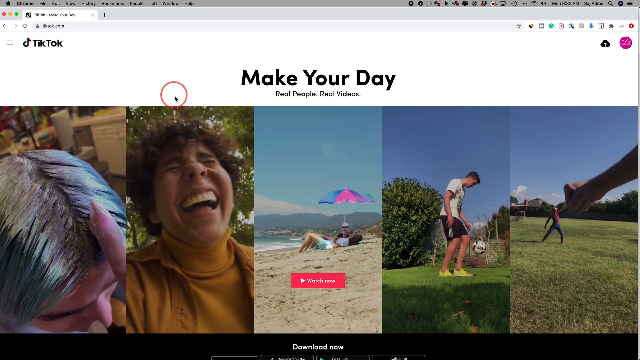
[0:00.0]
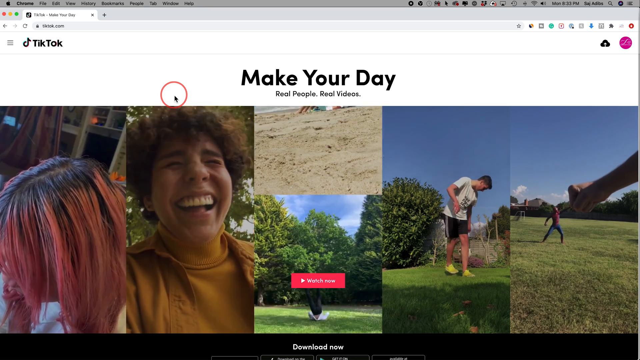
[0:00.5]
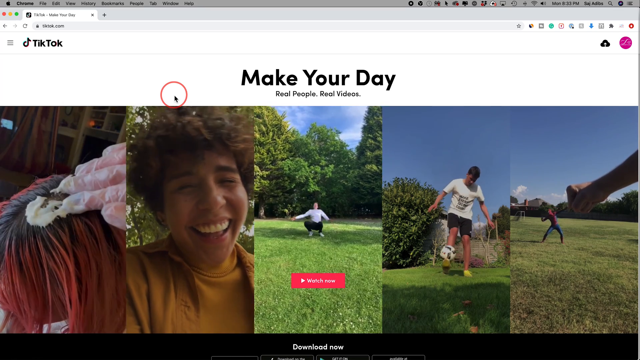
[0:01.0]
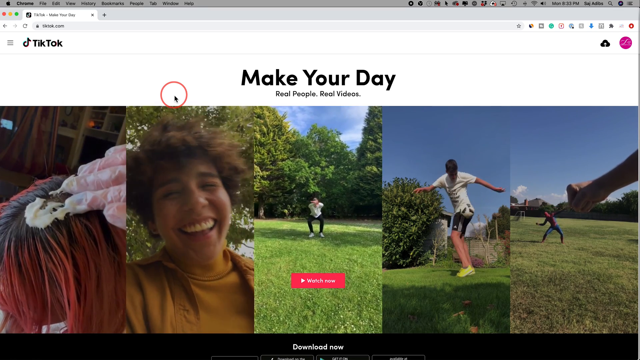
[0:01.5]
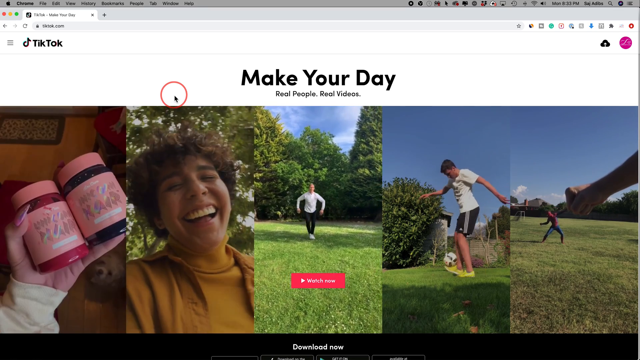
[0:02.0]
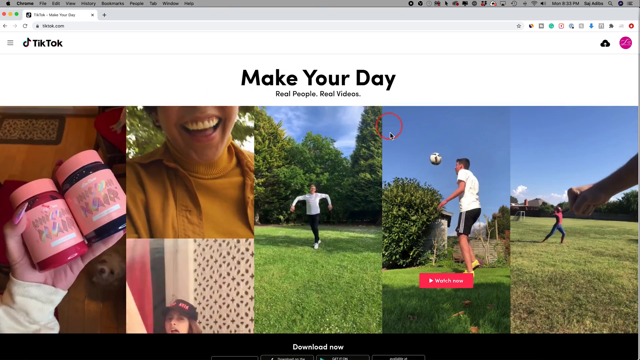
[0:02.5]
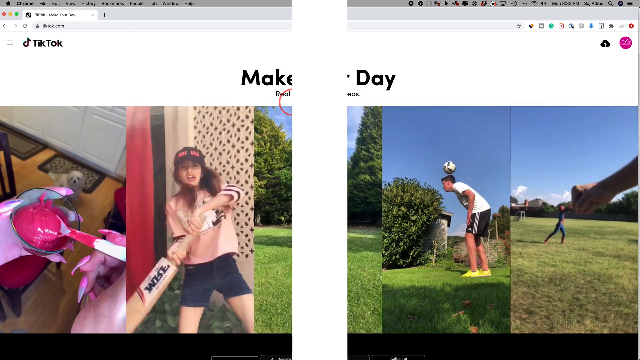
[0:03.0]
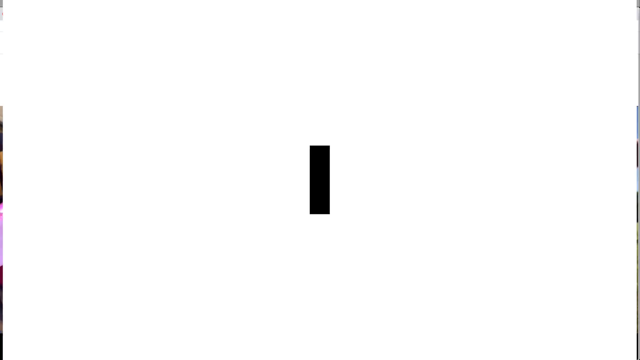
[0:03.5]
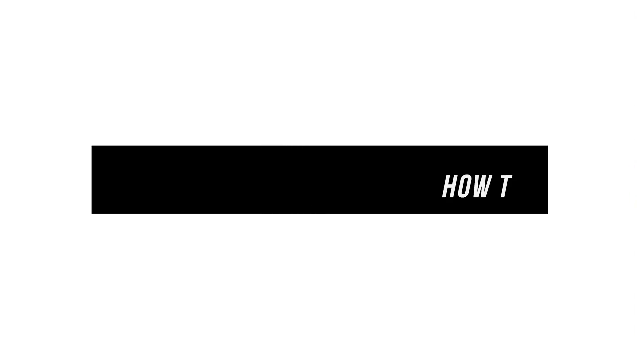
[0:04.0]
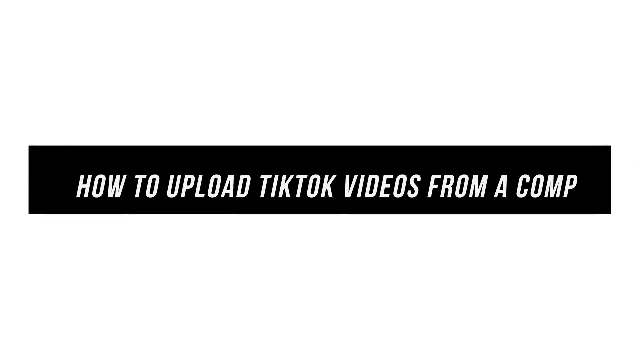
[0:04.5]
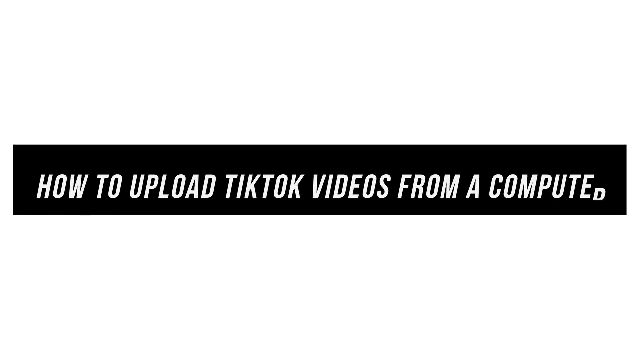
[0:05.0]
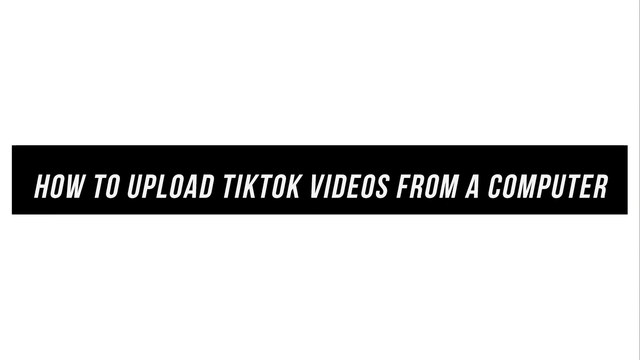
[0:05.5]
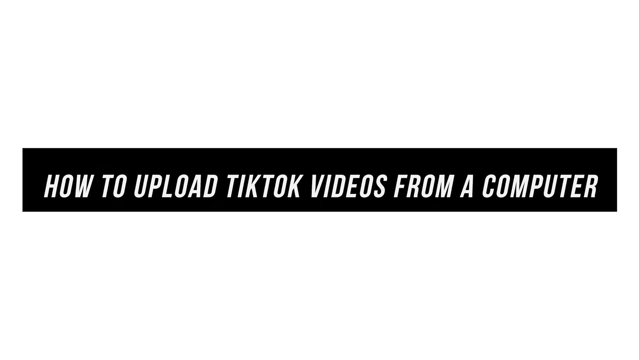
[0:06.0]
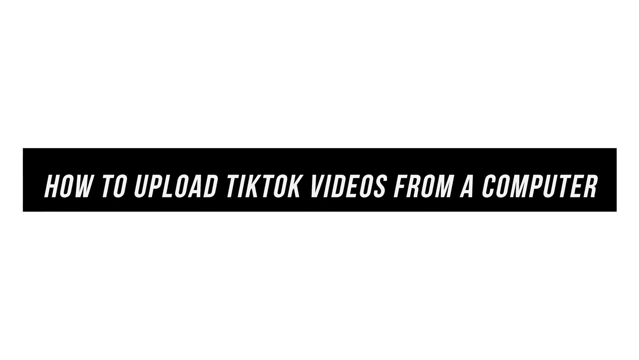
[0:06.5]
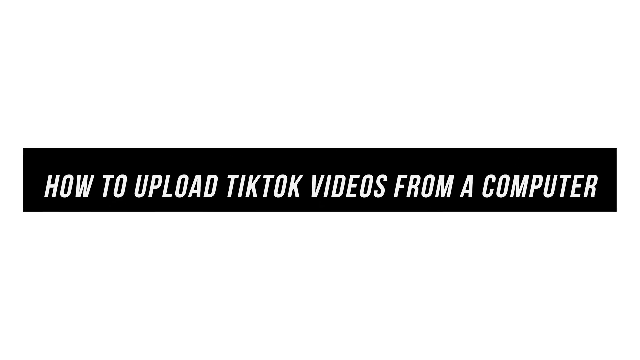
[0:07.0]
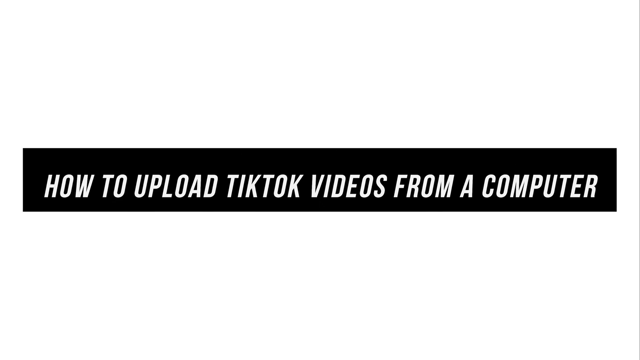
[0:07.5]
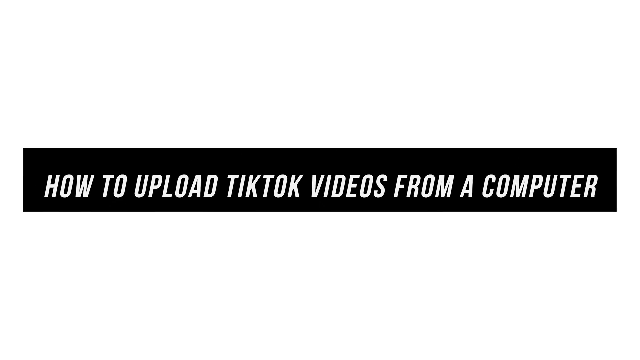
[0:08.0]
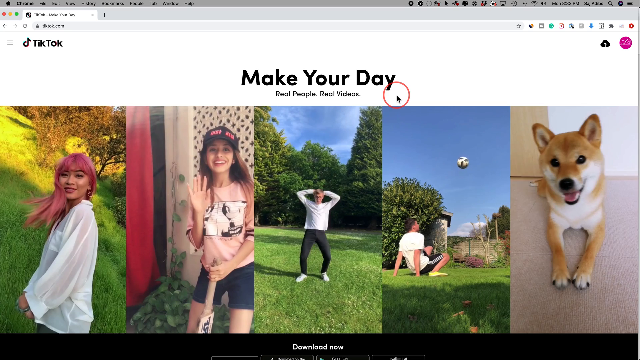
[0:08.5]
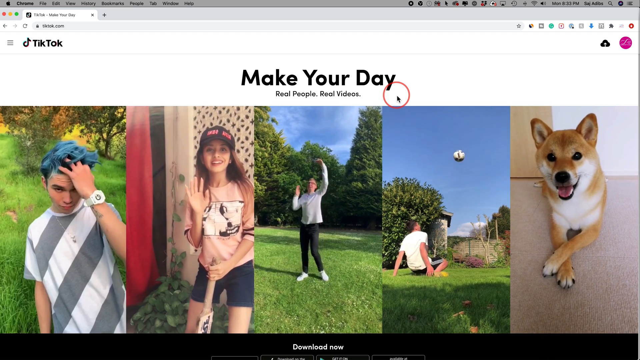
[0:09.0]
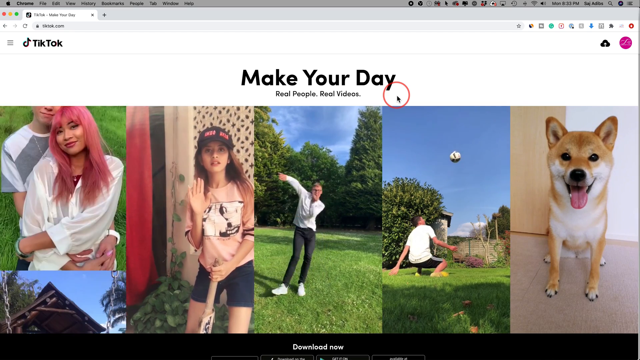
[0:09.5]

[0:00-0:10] A Chrome browser window on an Apple computer shows the front page of TikTok. At the top is the TikTok header, beneath it "make your day" in large text, and under that, in smaller text, "real people real videos." Five vertical videos play side by side. The first shows a woman's head as she spreads some kind of cream into her pink hair. The video to its right shows a boy with curly hair outside underneath a tree, laughing; he wears a brown shirt with a yellow shirt underneath. The next shows a lady squatting in the middle of a park, who stands up and approaches the viewer doing a bizarre dance. The next shows a man in the park doing tricks with a ball involving his head, along with some fancy footwork. The last video on the right is a point-of-view image of someone receiving something thrown to him. After these videos play, the screen whites out and a black rectangle expands in the middle of the screen with the text "how to upload TikTok videos from a computer." It stays for a second, then the page returns to the original layout of five vertical videos. The first shows a man with blue hair running his fingers through his hair, wearing a gray and white striped shirt. Next to it, a woman in a pink shirt with some kind of manga panel on it and a black hat with pink text does some kind of Vulcan salute while wielding a bat of some sort. The next video shows the same dancing person in the same park doing a spin away from the viewer, the next shows the same person doing tricks with the ball, and the last shows a Shiba Inu dog crossing his arms.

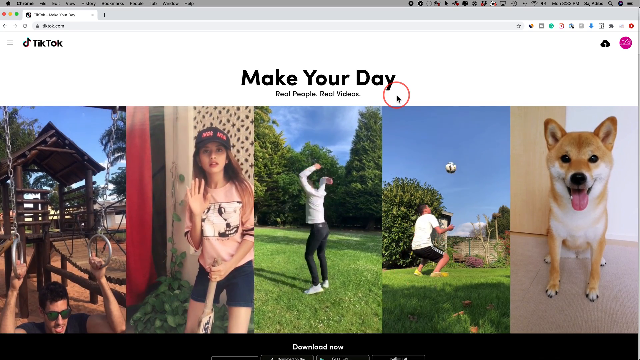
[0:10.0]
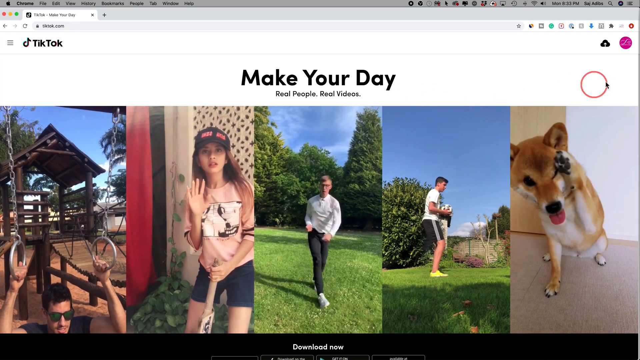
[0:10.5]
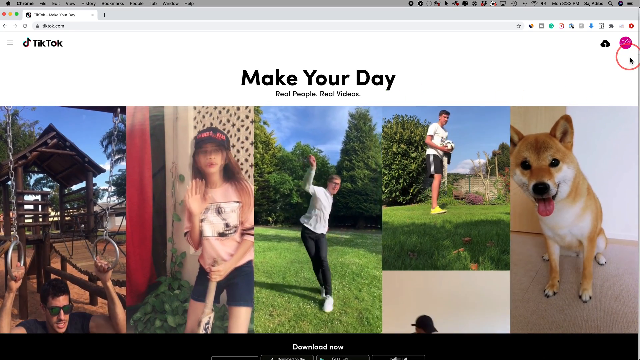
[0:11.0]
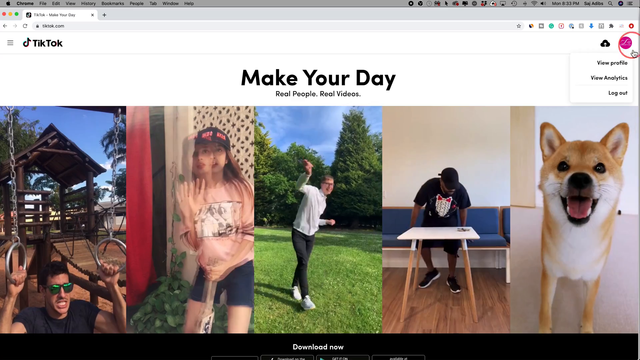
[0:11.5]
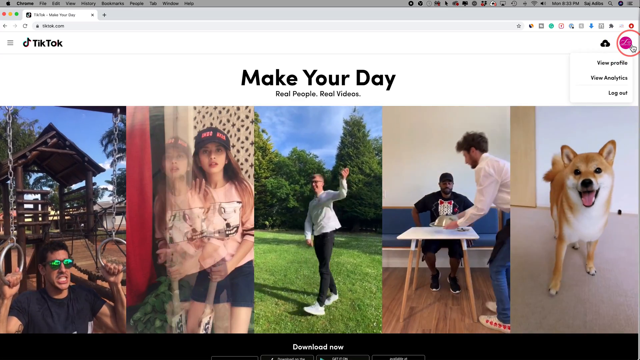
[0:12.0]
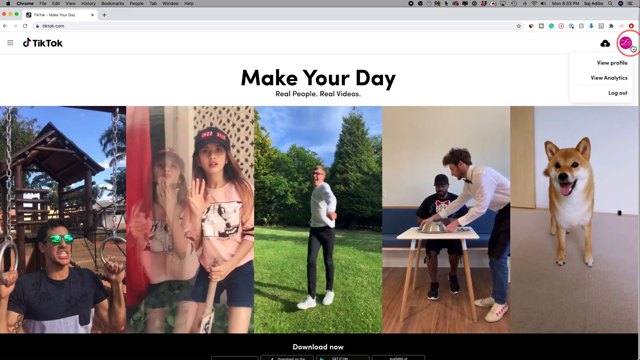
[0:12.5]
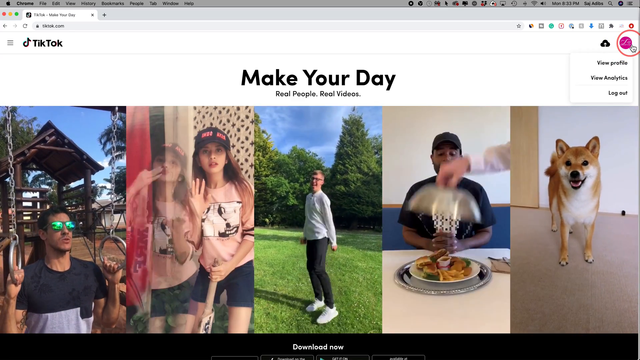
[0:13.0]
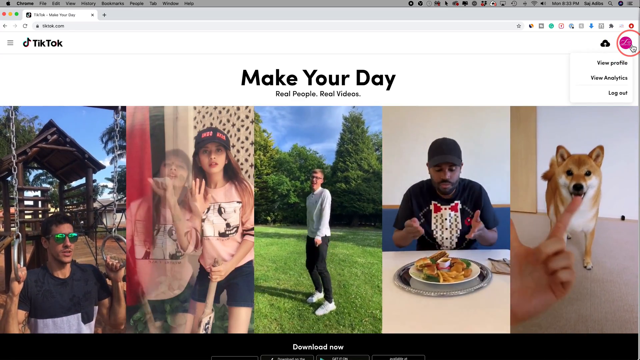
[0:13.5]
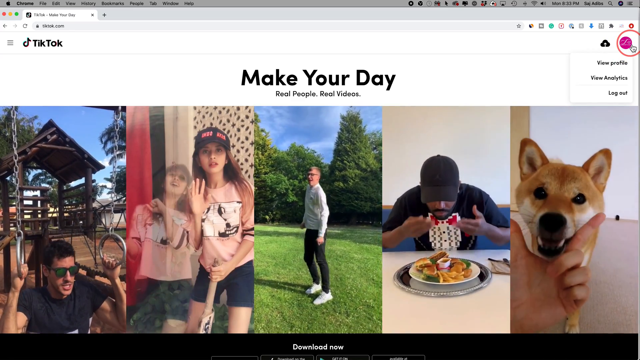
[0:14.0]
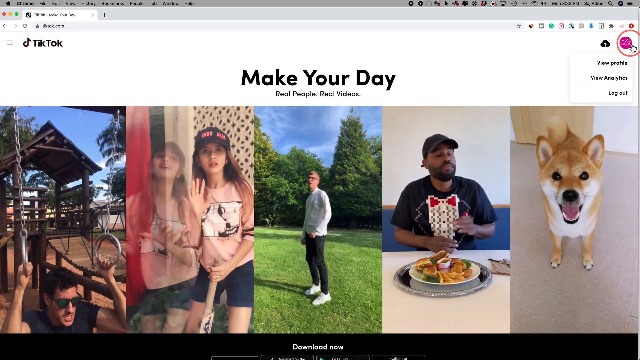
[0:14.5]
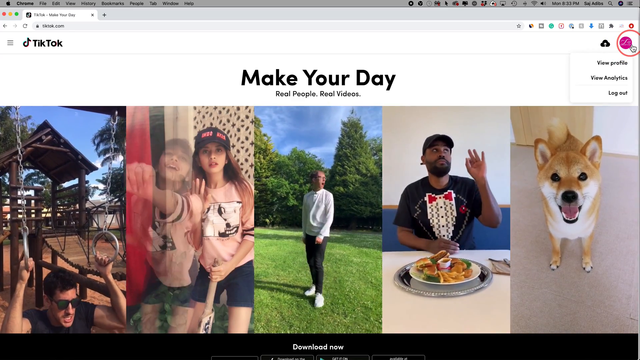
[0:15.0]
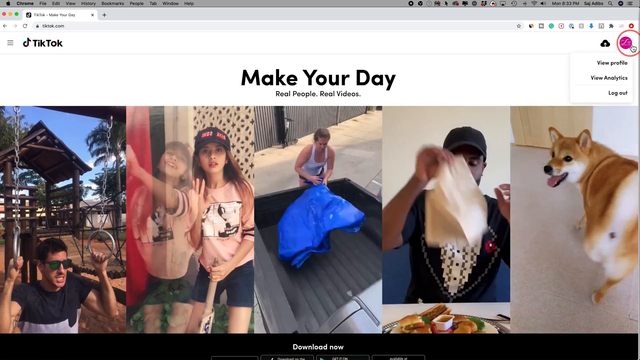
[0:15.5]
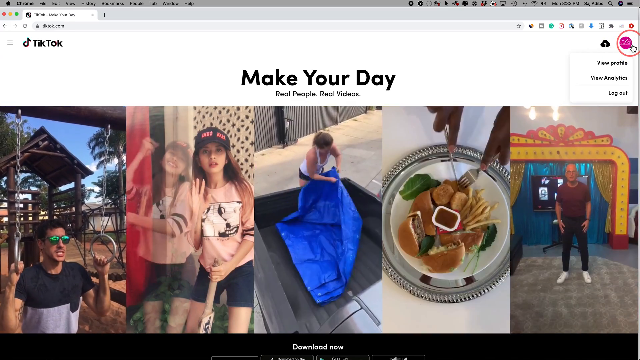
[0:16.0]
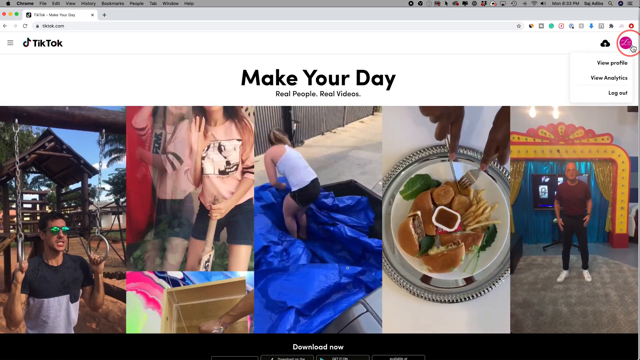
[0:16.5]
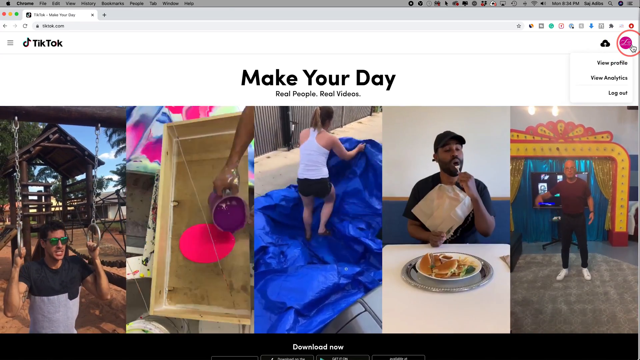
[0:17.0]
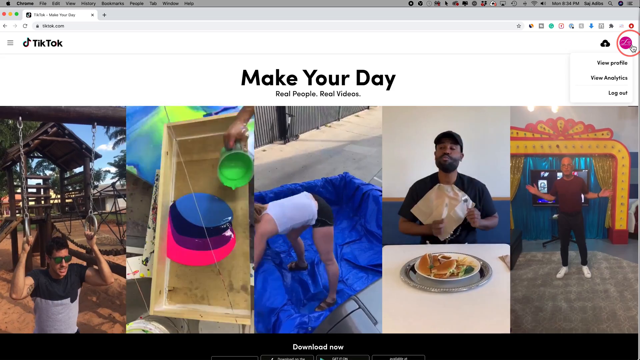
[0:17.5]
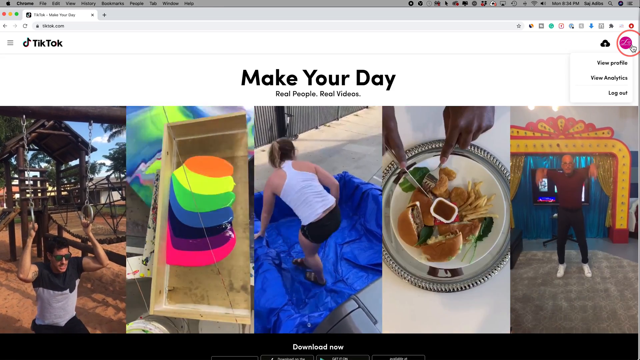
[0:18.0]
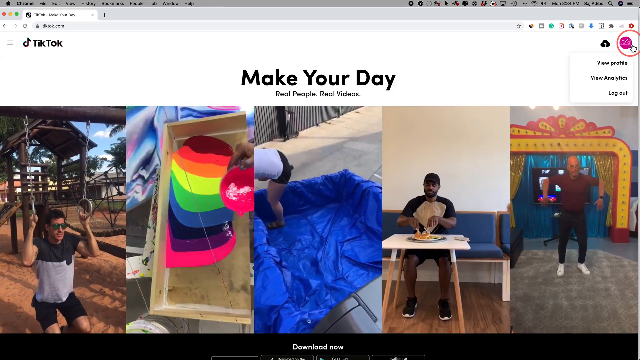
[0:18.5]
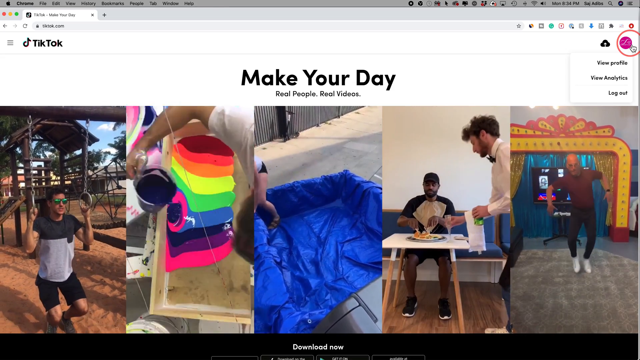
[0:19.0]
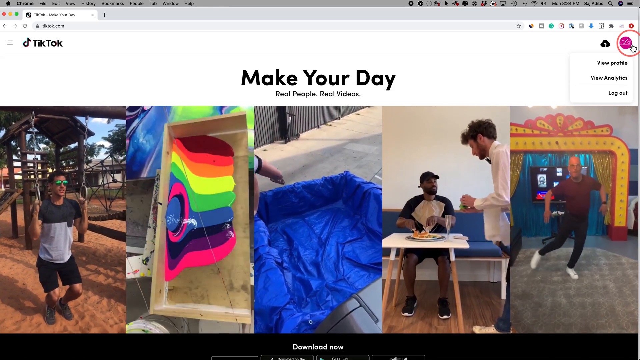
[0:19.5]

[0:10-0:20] The same TikTok page shows five videos lined up next to each other, all playing at the same time. In the first, a man in a playground does some kind of pull-up routine, holding two rings and lifting himself up and down. In the second, the same woman in the pink shirt is still doing that wave; a second superimposed image comes out of her, she makes some kind of hand gesture with both hands, then leans back and laughs. The third shows the same man in a park, wearing a white shirt and black pants, doing a jolly dance toward the viewer. In the fourth, a black man stands over a table and a white man with curly hair, apparently a waiter of some sort, comes in wearing a white shirt, a bow tie and an apron at his waist. He brings in a cloche and lifts the lid. The black man wafts the food scent toward himself; the plate appears to hold different things like chicken and hamburgers with fries and a dipping sauce in the middle. He then looks up at the waiter and makes the okay hand gesture. In the fifth video, the same Shiba Inu dog walks up to the viewer, whose hand holds the thumb and forefinger out in a V; the dog puts its chin in the crook of the V and then does a little spin. The page then moves to the next selection of videos. To the right of the man doing pull-ups, people slap fluorescent paint across a canvas in a rainbow pattern, from pink at the bottom through purple, some indigo, blue, green, yellow, orange, red and deep red, then put more paint inside it; the paint is slowly displaced, forming a pattern. The next video shows a woman with a blue tarp, putting it all over some kind of black box she is standing in. The next shows the black man again, tucking a napkin into his shirt collar, cutting a chicken nugget with a fork and knife, raising it to his mouth and looking satisfied. The next shows an old man in a red shirt in what appears to be some kind of booth, doing a little dance.